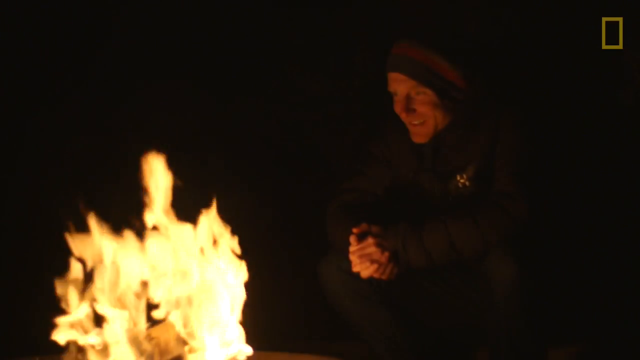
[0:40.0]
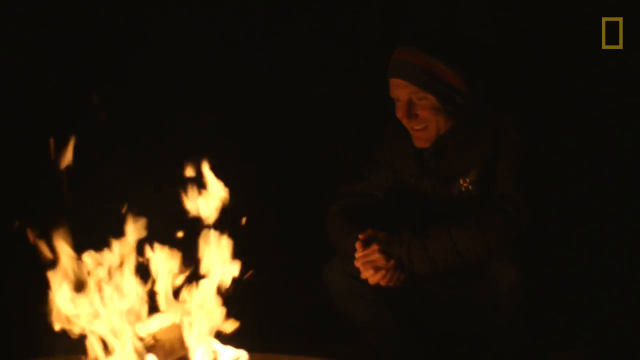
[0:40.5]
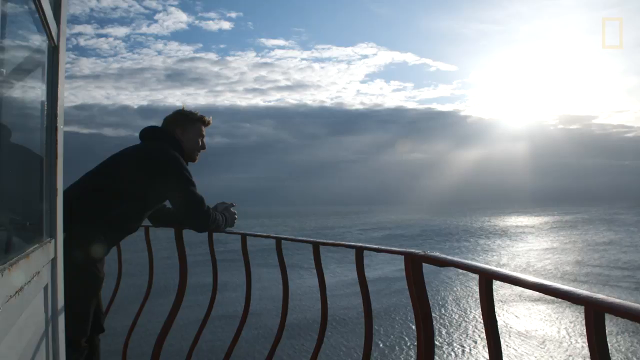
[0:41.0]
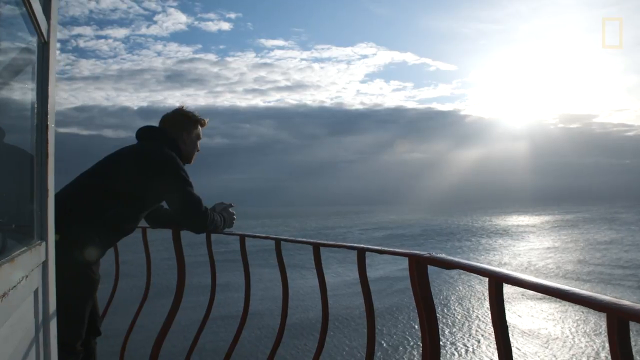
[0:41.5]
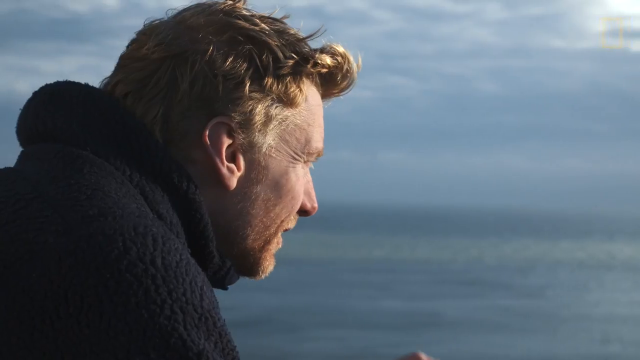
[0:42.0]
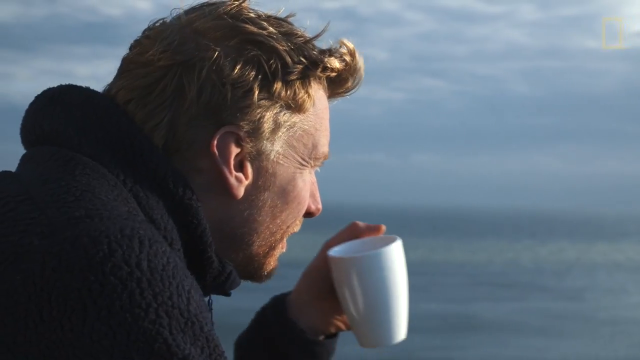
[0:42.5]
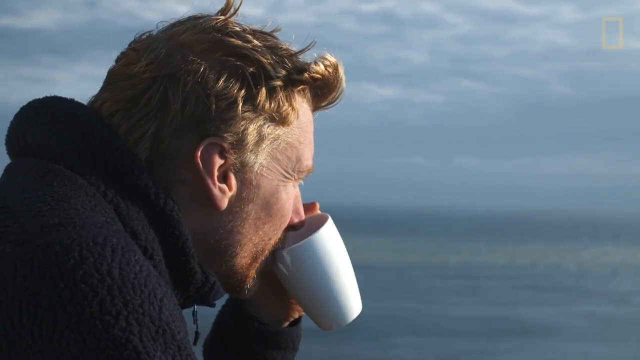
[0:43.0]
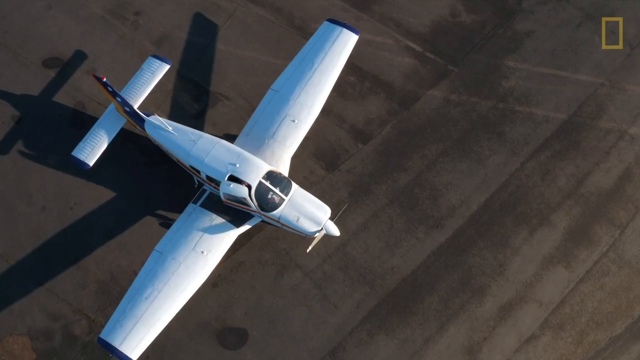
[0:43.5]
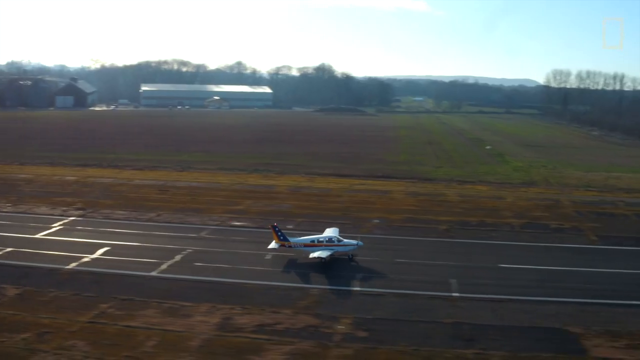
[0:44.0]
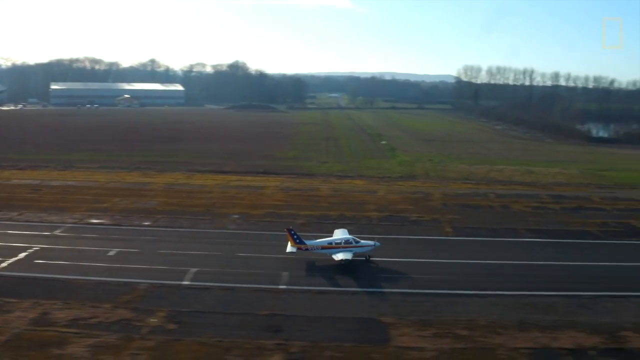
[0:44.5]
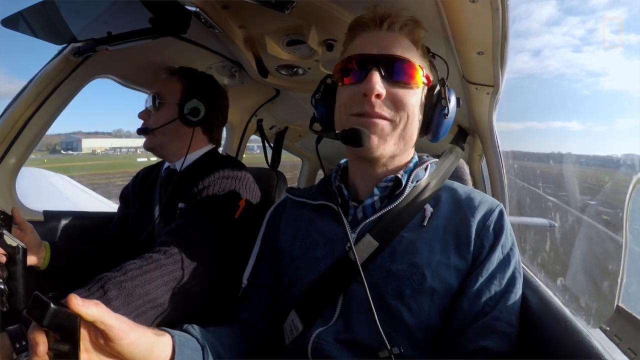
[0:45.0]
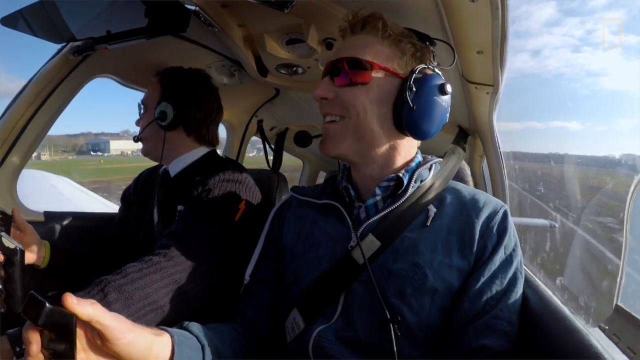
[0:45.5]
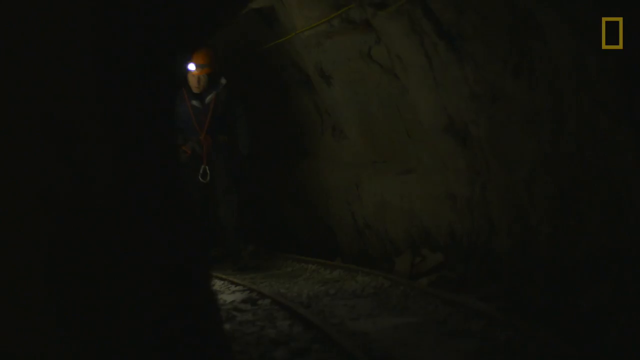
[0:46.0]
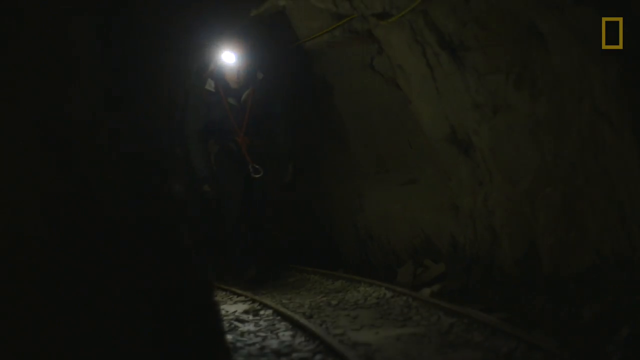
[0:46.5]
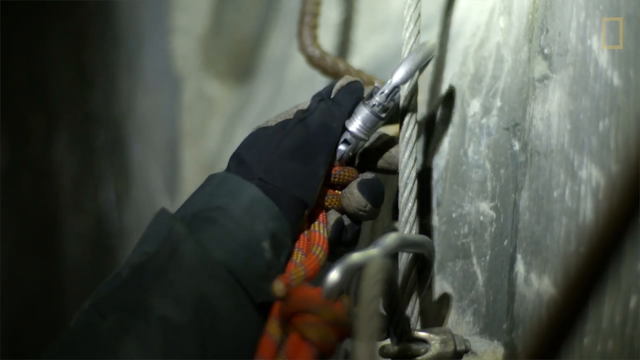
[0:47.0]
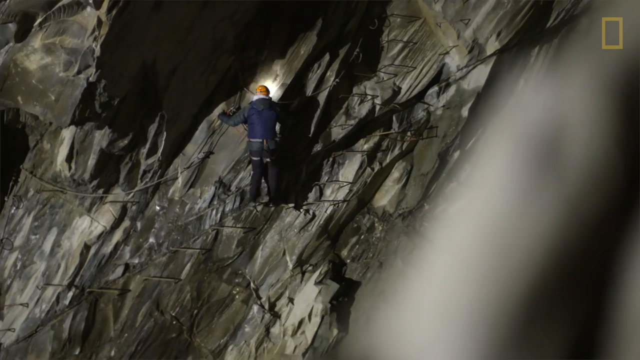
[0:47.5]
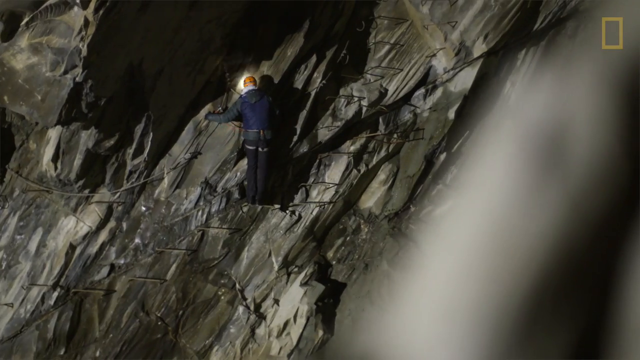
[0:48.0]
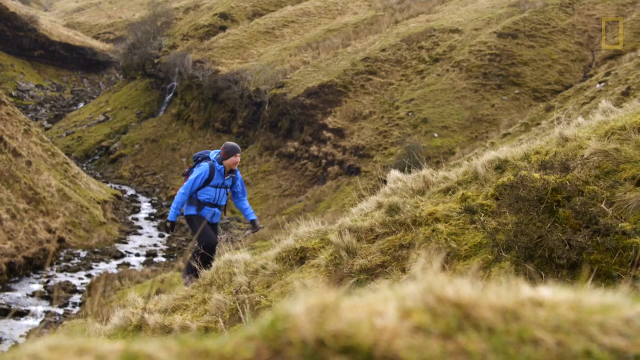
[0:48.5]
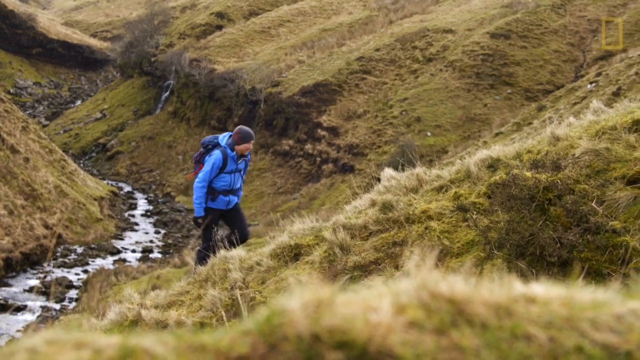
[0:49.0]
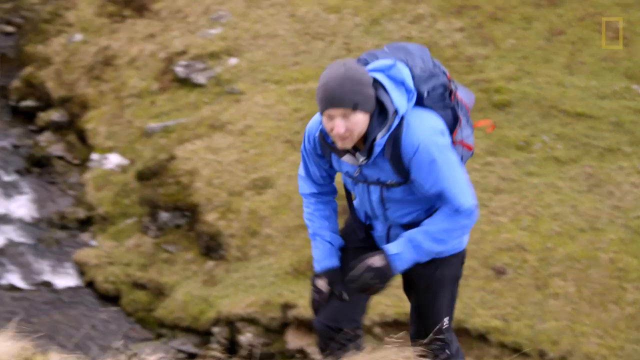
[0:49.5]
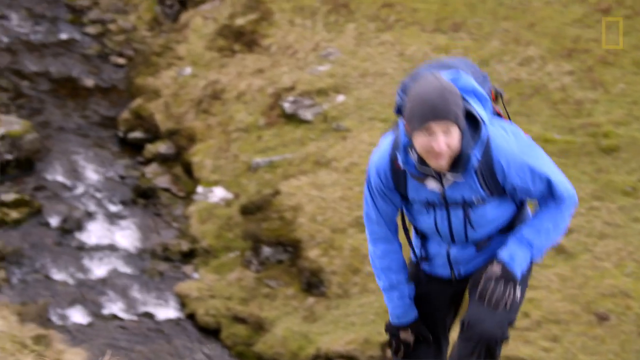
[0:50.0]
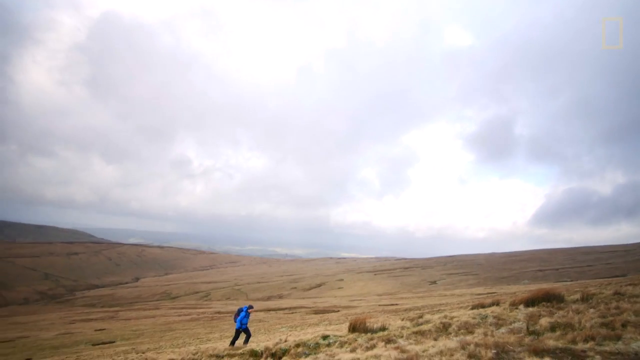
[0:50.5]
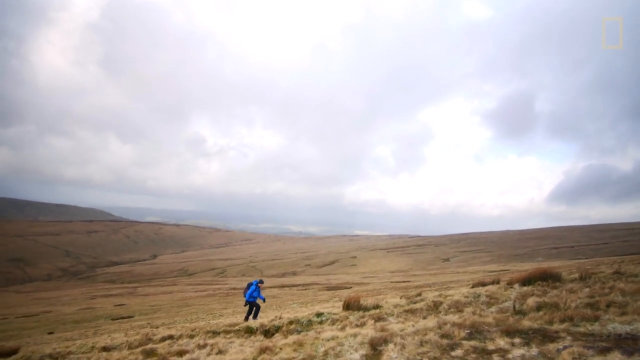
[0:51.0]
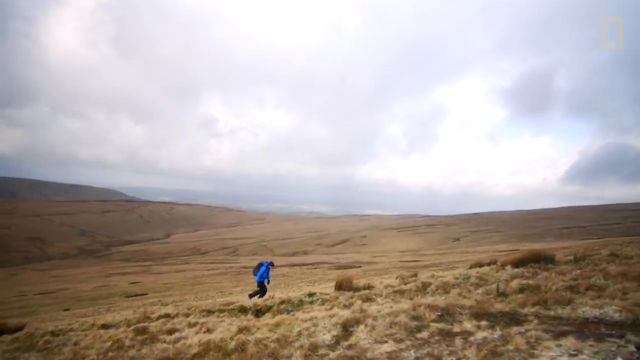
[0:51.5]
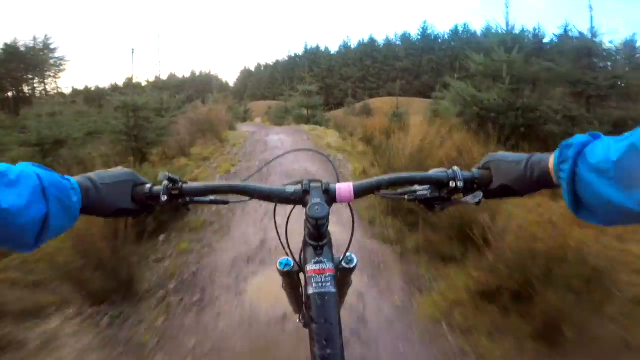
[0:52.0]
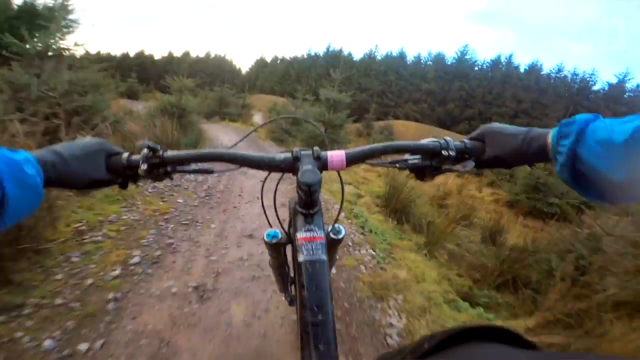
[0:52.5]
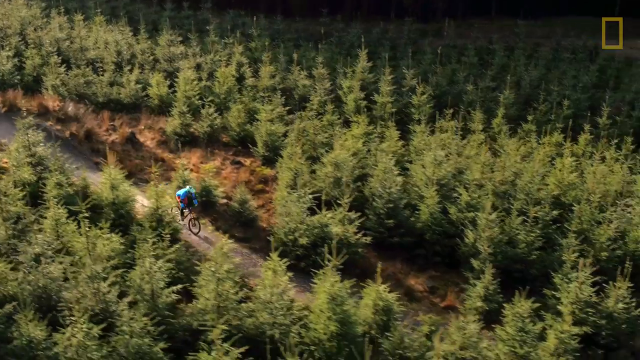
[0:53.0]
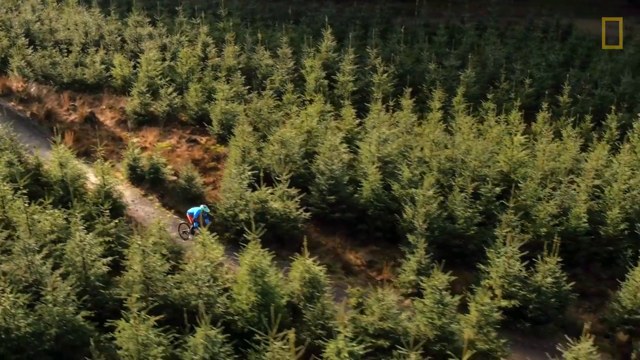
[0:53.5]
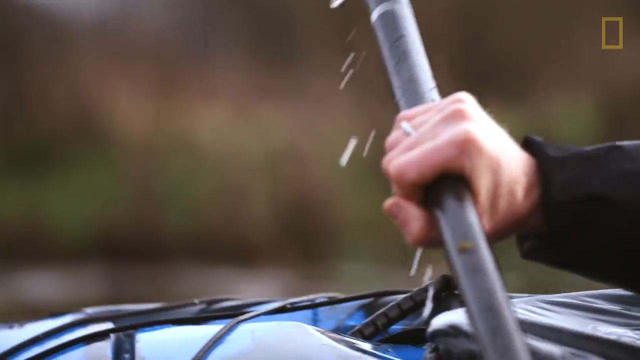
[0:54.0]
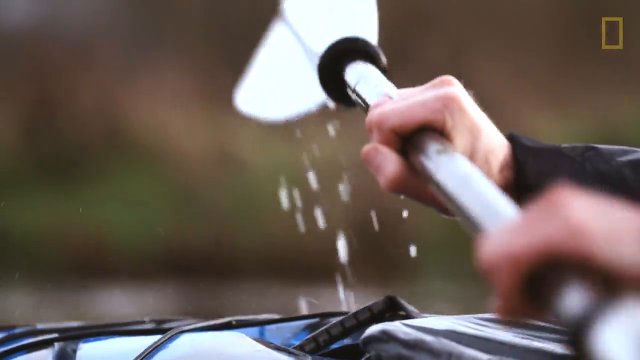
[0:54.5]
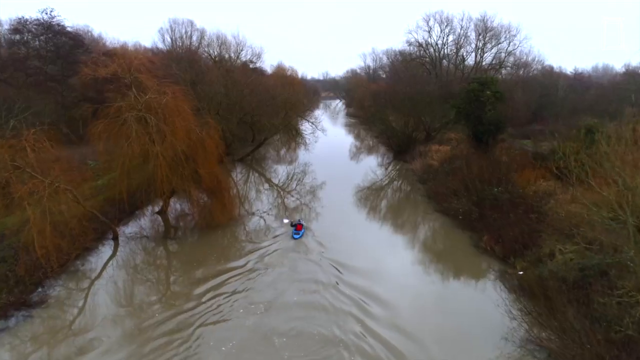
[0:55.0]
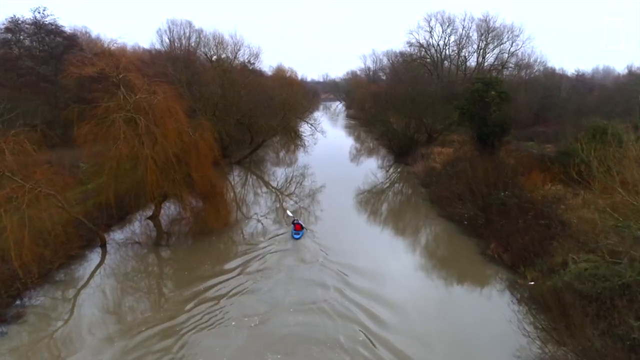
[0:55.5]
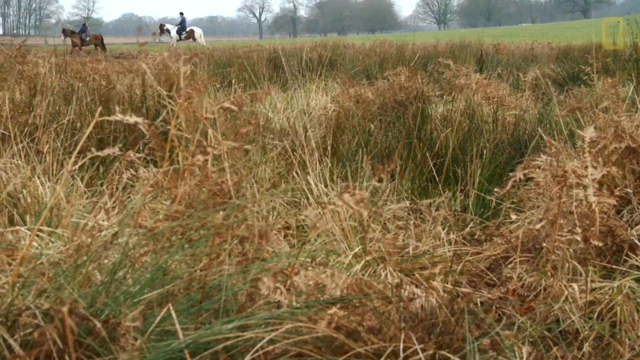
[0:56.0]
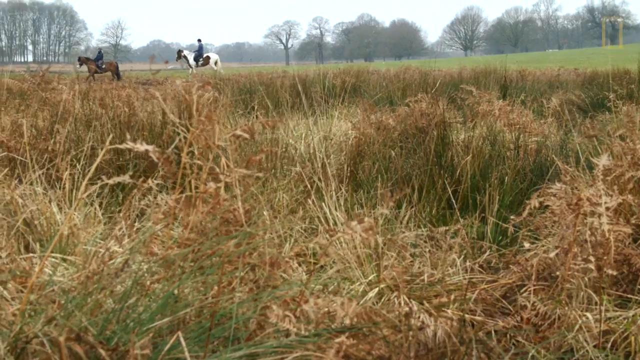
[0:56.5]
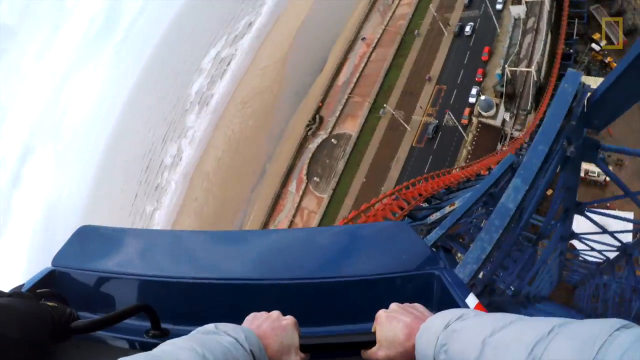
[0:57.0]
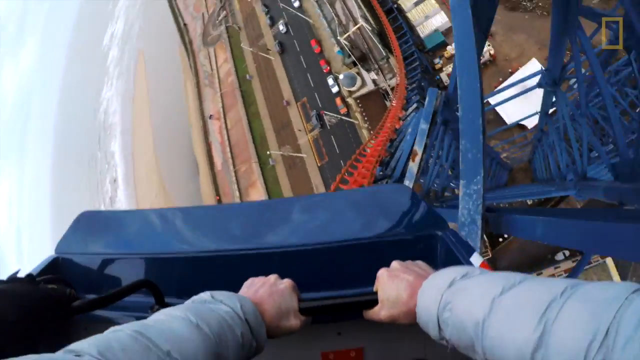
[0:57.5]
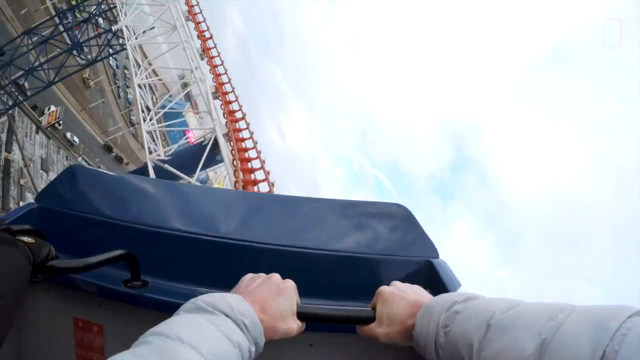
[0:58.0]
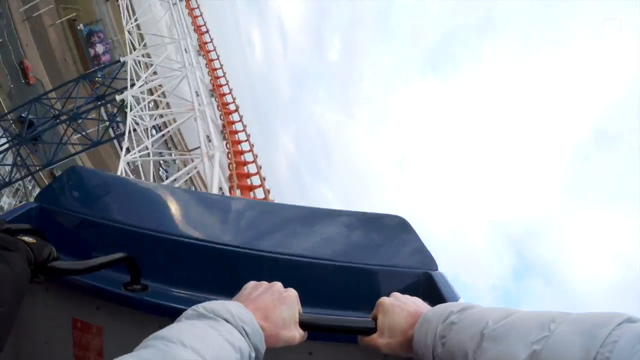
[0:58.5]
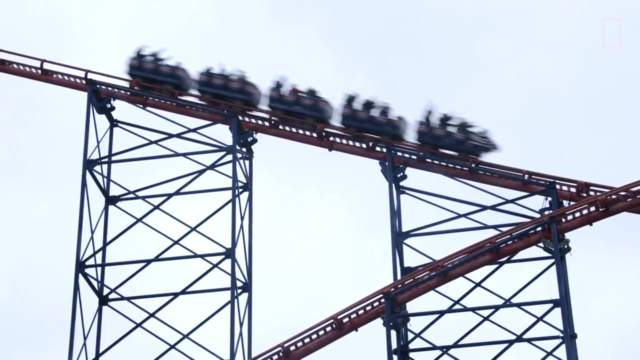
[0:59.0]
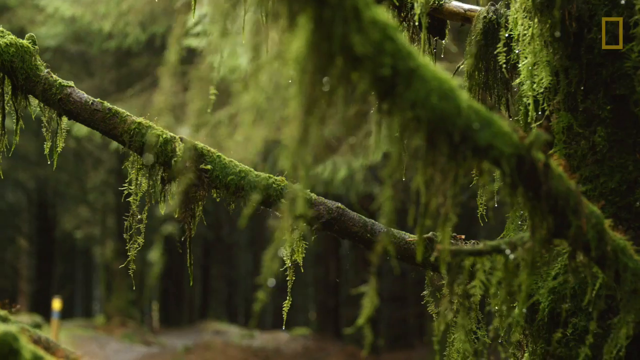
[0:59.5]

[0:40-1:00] The man sits around a campfire at night. The scene changes to him in a lighthouse; at the top he looks out over the ocean while drinking a cup of coffee. Next he is inside an airplane taking off from an airport. Quick cuts follow of him cave climbing, hiking through mountainsides, canoeing down the canal of a river and riding rides in theme parks. At one point the coast of Ireland apparently appears, with cliffs that come right up to the ocean's edge. Each activity is a separate cut, and the scenes transition very quickly. He hikes on the plains of Great Britain, rides a mountain bike down a trail on the plains, goes horseback riding and rides roller coasters. He also appears to be in forested areas that look like enchanted forests.